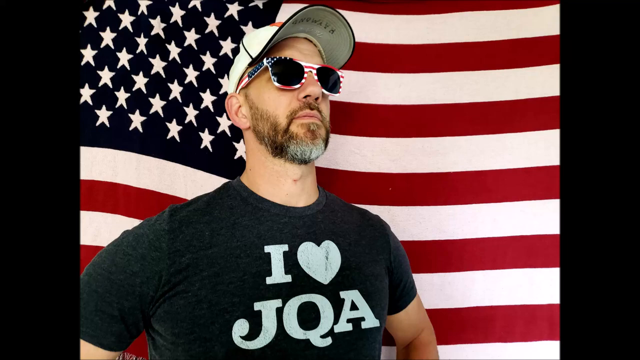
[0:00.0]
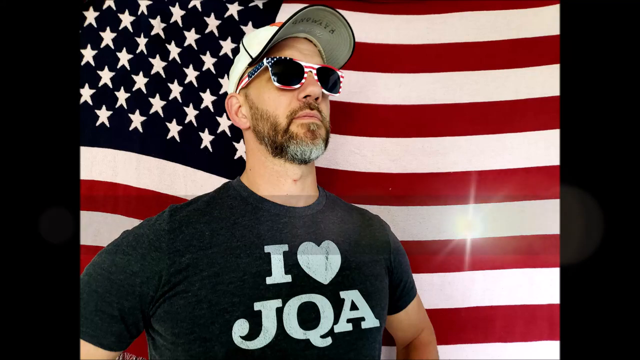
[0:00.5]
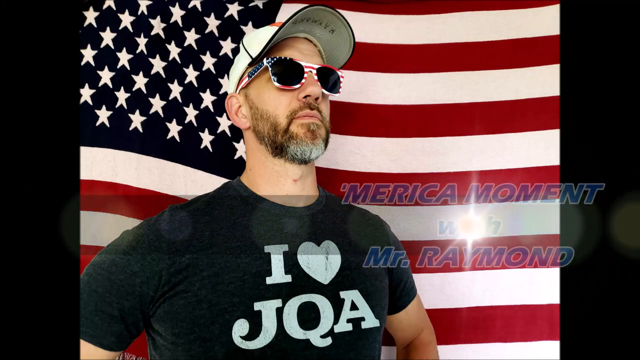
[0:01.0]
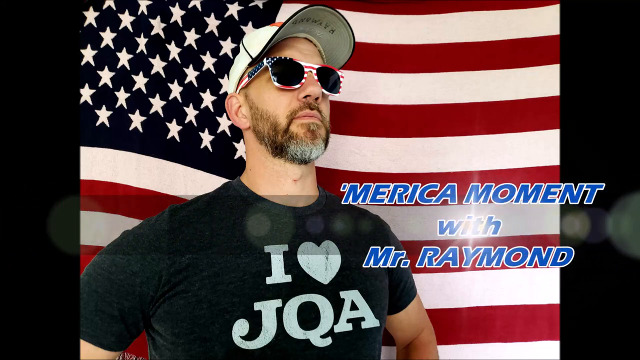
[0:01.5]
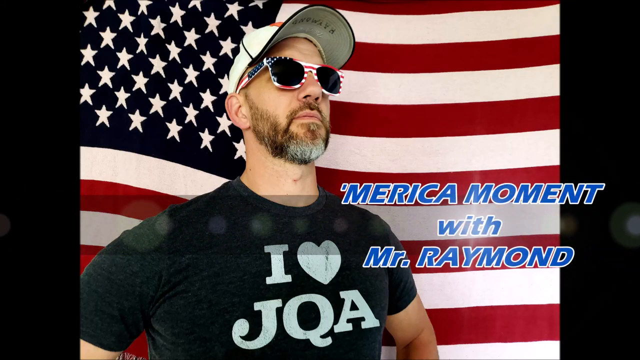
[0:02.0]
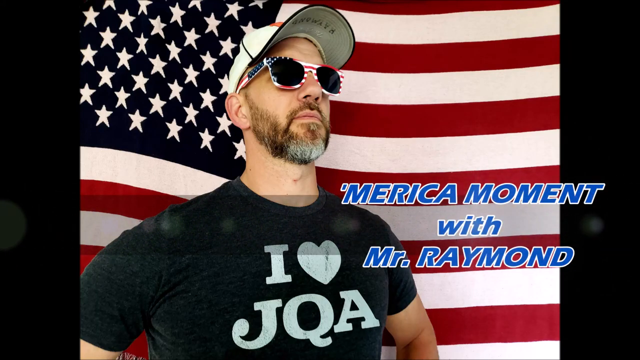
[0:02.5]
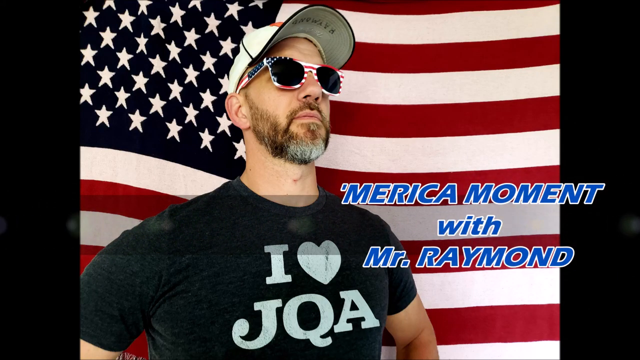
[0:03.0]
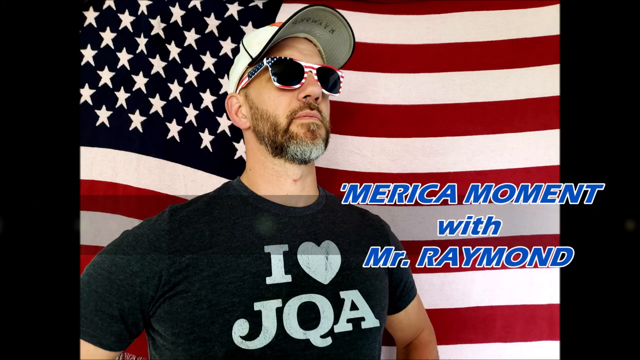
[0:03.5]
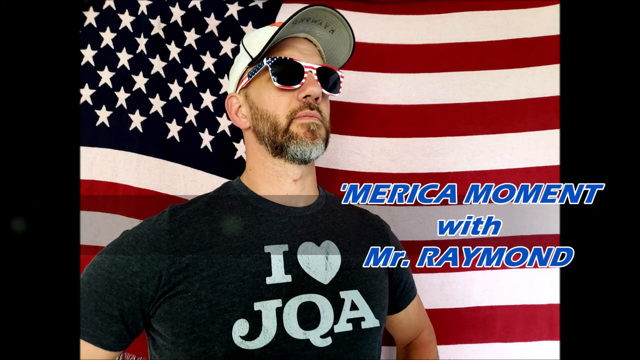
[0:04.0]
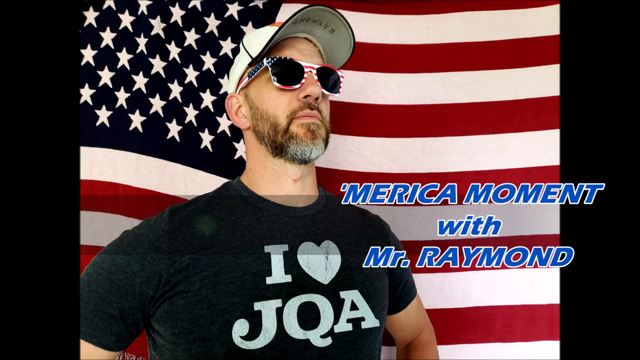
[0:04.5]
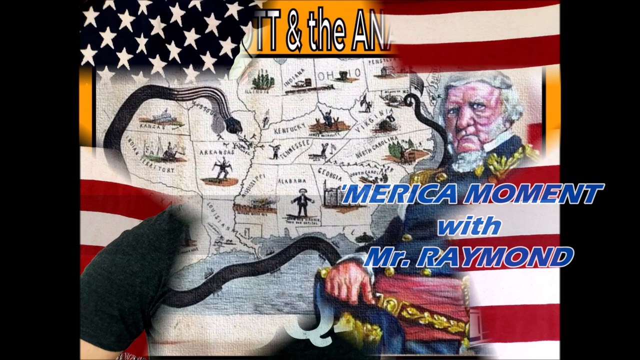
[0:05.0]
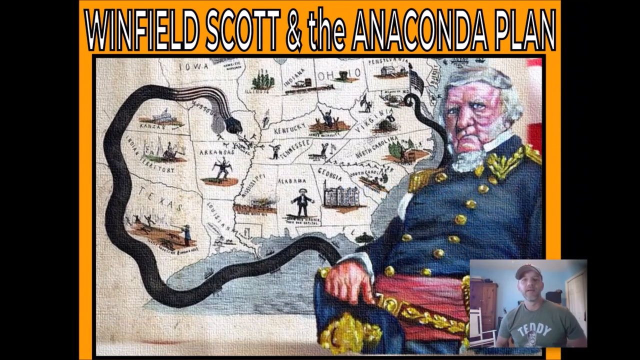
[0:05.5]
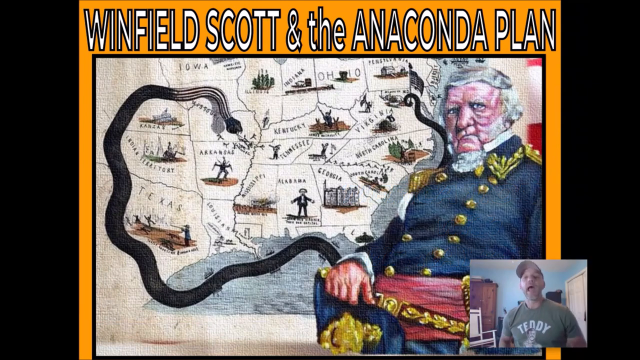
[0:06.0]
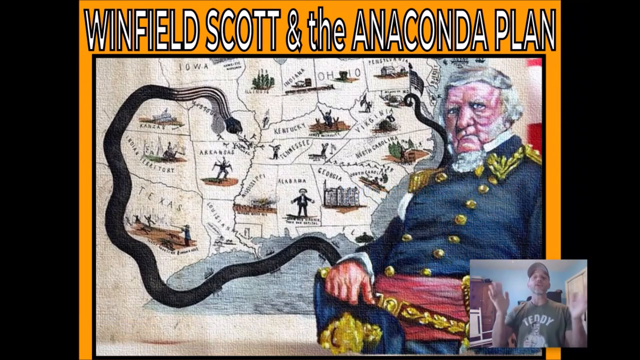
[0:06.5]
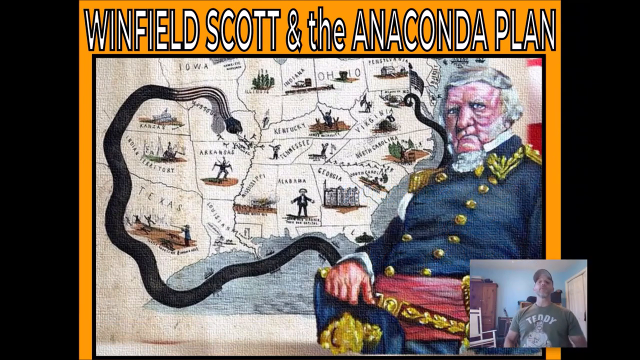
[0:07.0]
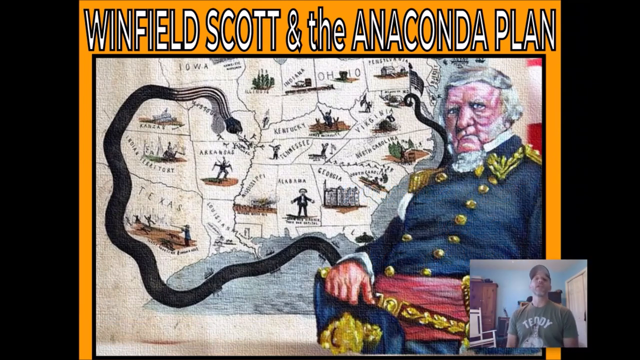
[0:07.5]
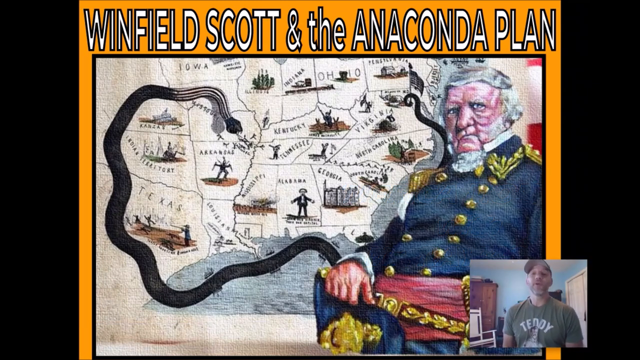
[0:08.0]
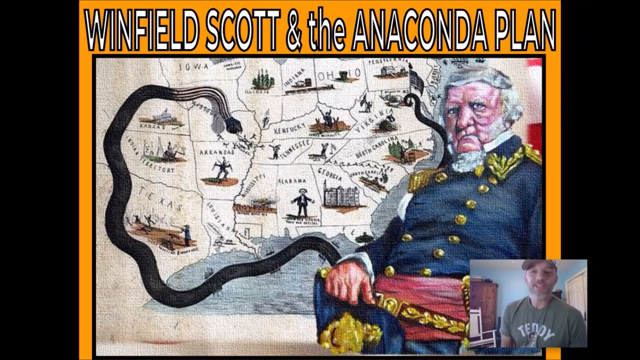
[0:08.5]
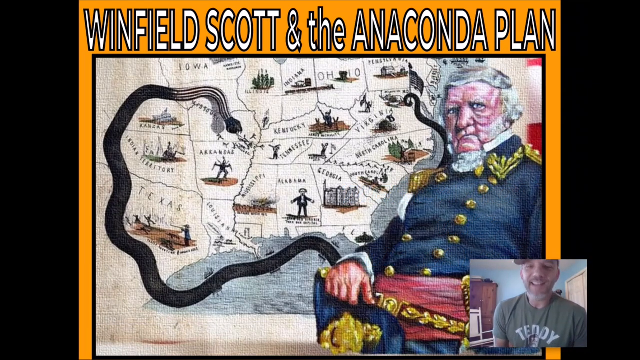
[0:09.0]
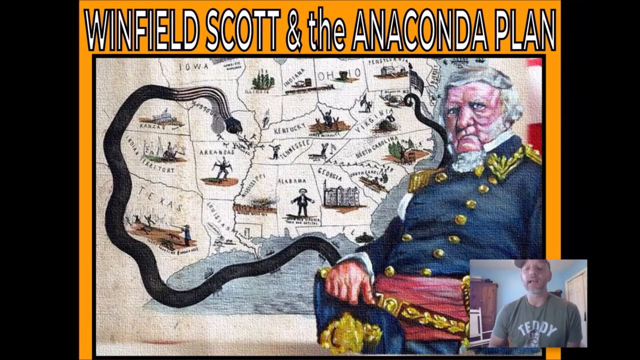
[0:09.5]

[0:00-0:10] The video opens on a man posing for the camera. He appears to be white. He wears a black shirt with the word "I", a heart logo and "JOA" on it, along with sunglasses whose frames have the American flag imprinted on them. An American flag is behind him. Blue text reading "America Moment with Mr. Raymond" appears on the right side of the screen and also on the left side. Next, a picture reading "Winfield Scott and the Anaconda Plan" appears, with a map and an elderly man on the right side who seems to be wearing soldier attire.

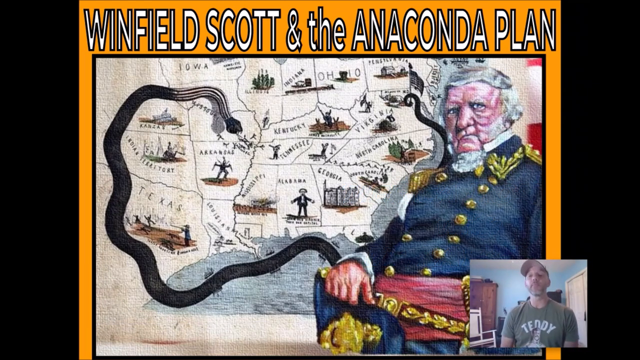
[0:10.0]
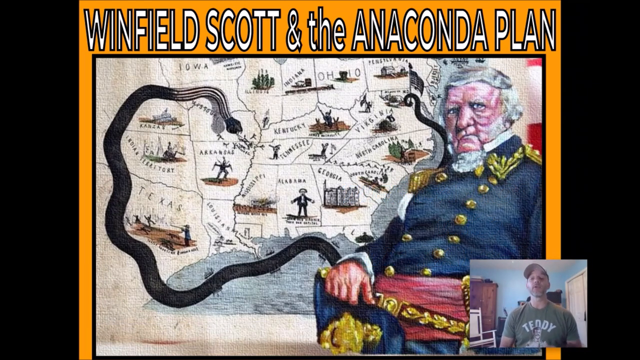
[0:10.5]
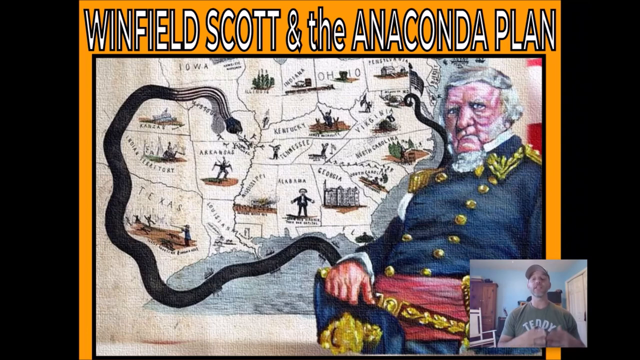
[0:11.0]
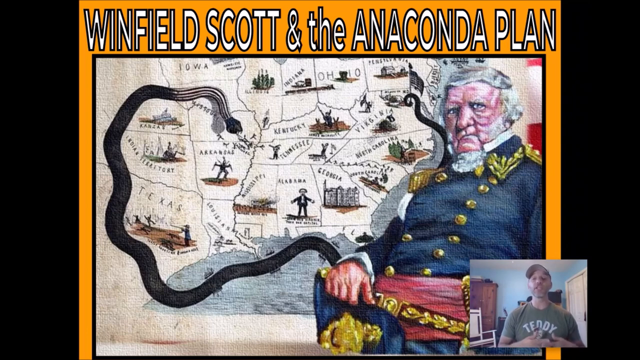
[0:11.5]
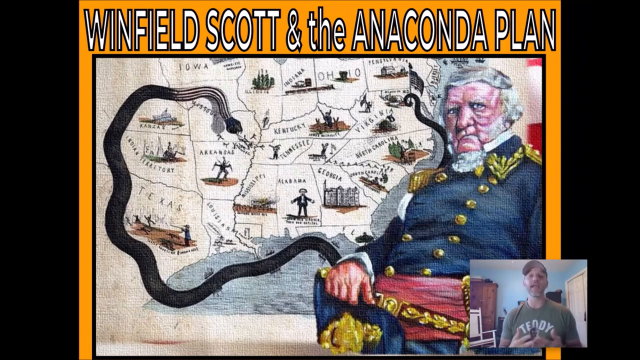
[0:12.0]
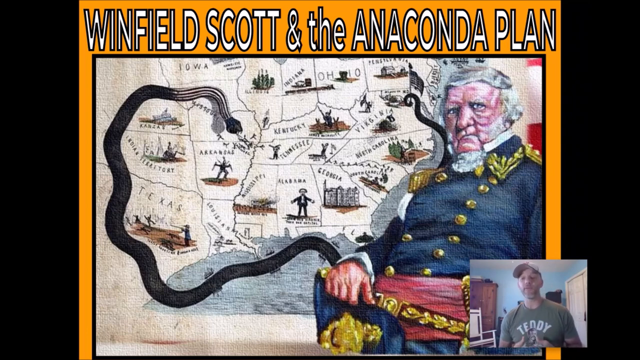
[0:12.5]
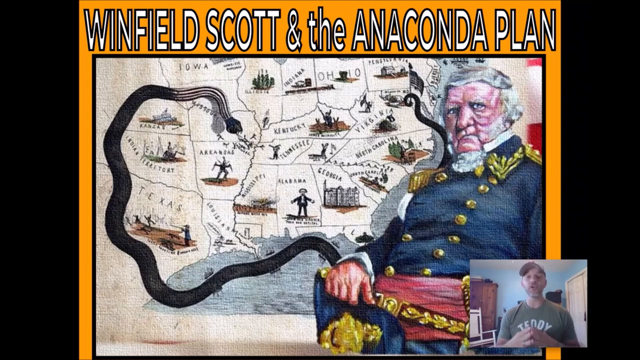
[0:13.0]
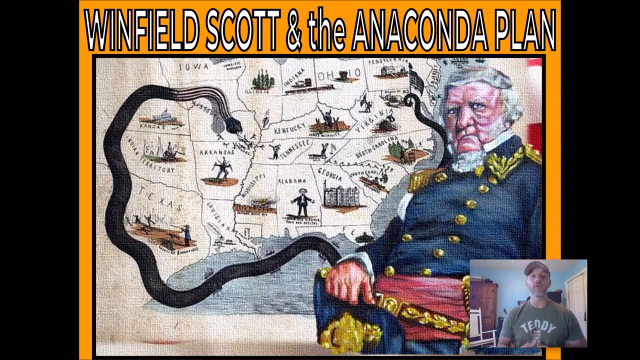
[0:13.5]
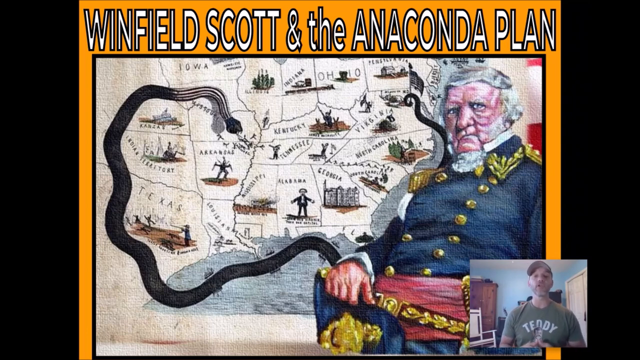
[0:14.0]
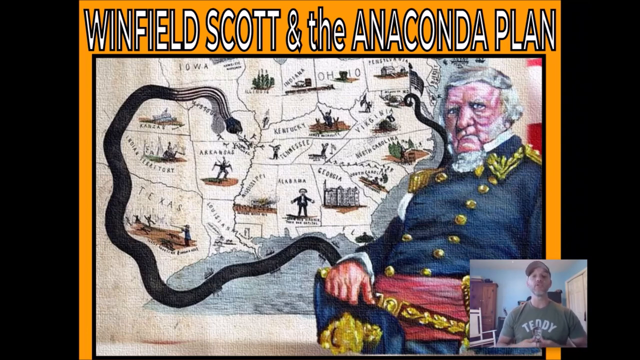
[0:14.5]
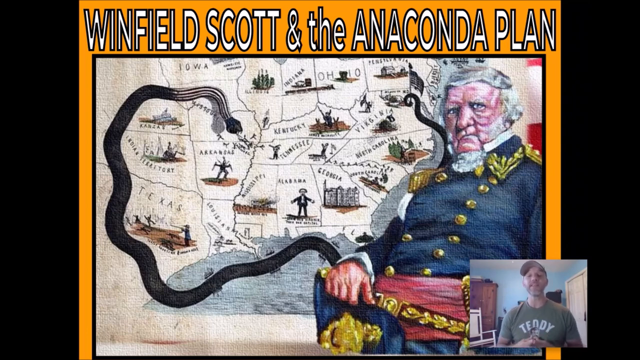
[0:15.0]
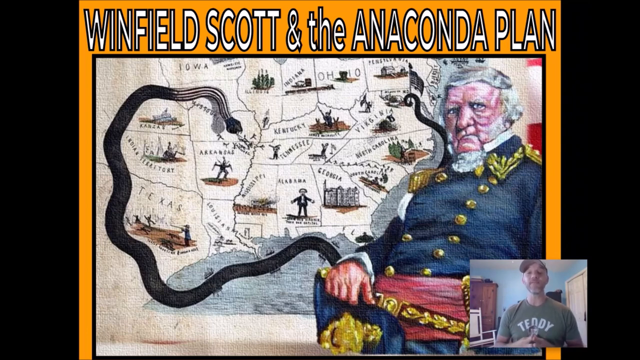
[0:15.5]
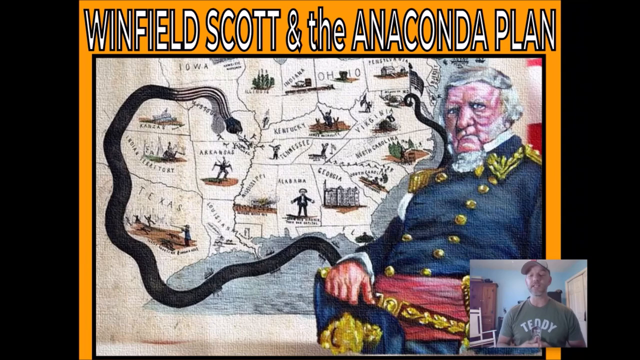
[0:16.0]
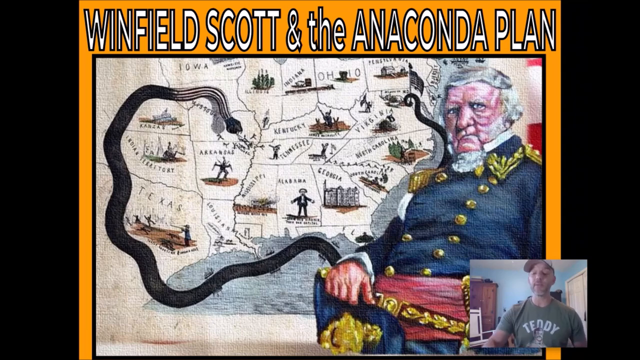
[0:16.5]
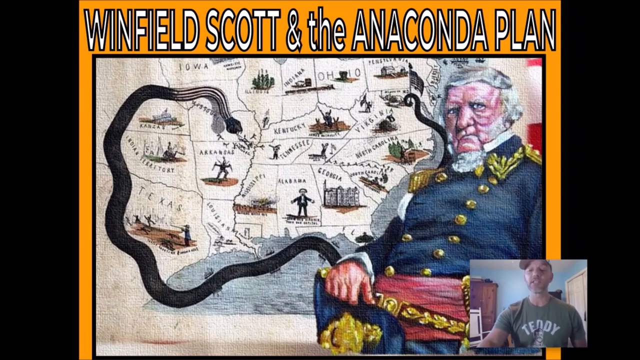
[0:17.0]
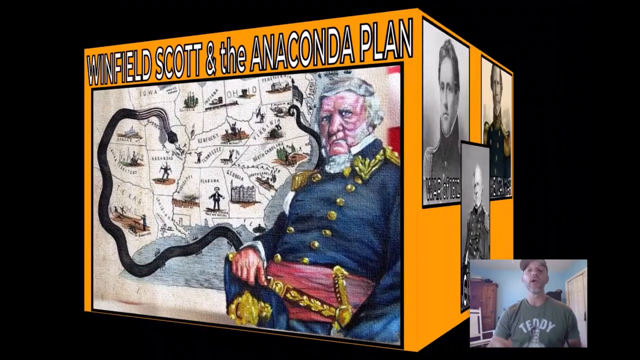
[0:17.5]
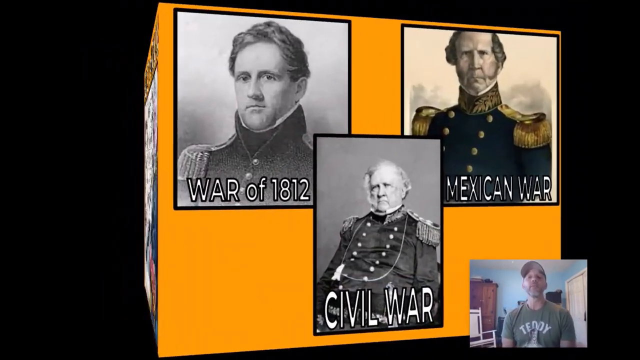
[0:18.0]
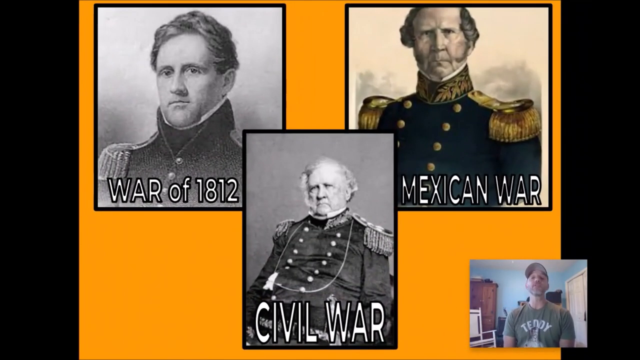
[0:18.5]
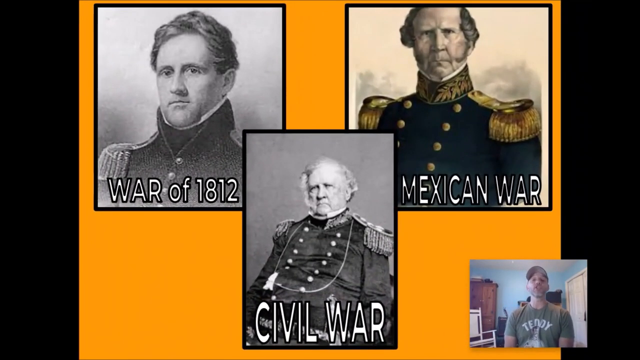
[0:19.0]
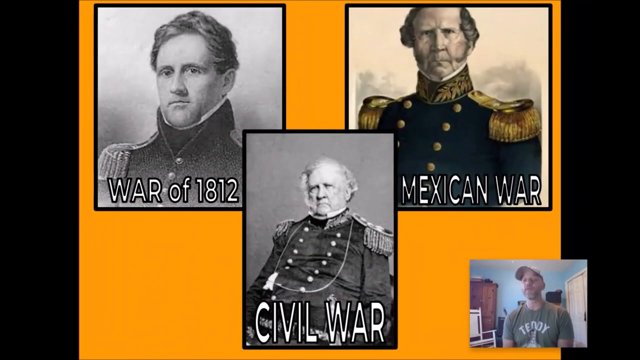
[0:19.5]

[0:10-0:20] The map labeled "Winfield Scott and the Anaconda Plan" on the lower right-hand corner continues to be shown. In a small rectangle, the man from the beginning of the video is recorded as he keeps talking into the camera. He wears a gray shirt, and there is a blue wall in the background. The view then transitions to another picture made up of three pictures, labeled "War of 1812", "Civil War" and "Mexican War". All three pictures have soldiers on them.